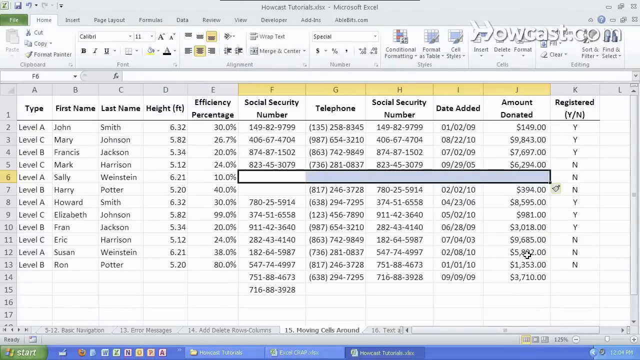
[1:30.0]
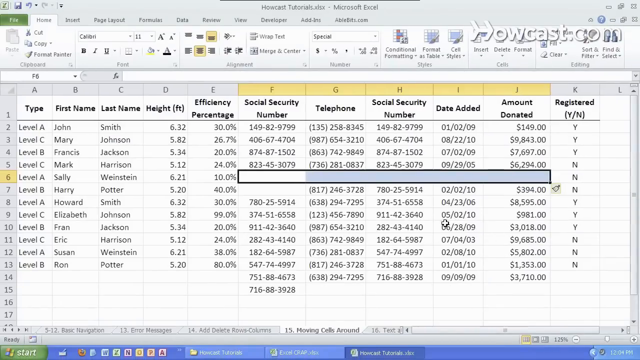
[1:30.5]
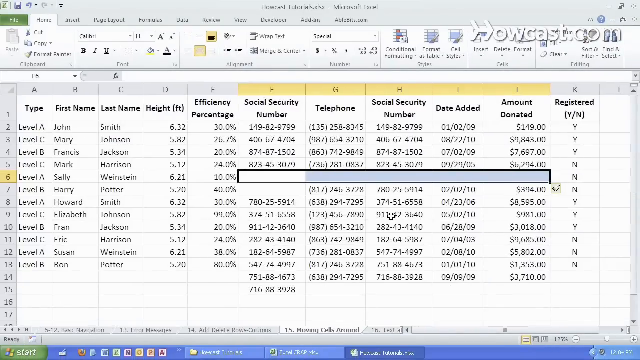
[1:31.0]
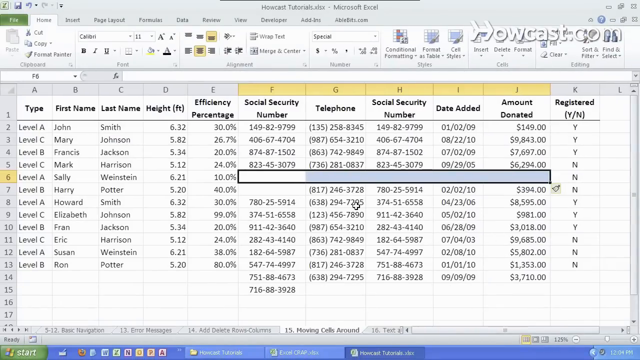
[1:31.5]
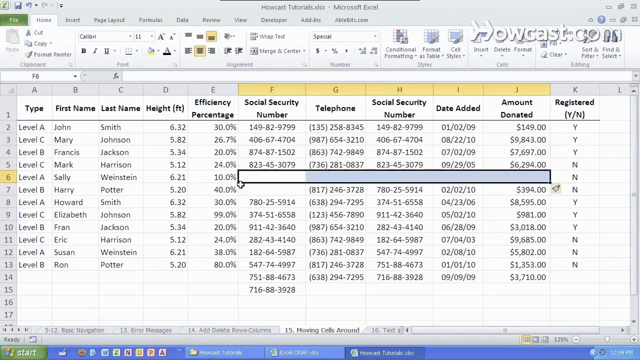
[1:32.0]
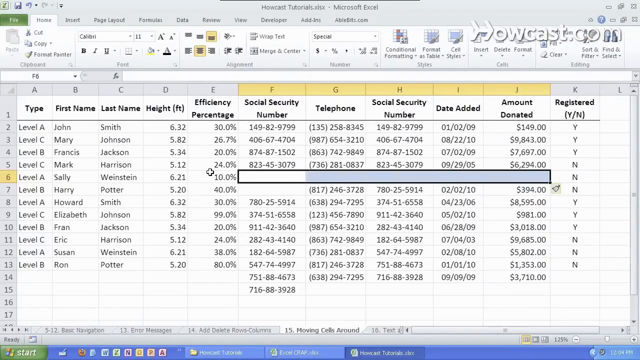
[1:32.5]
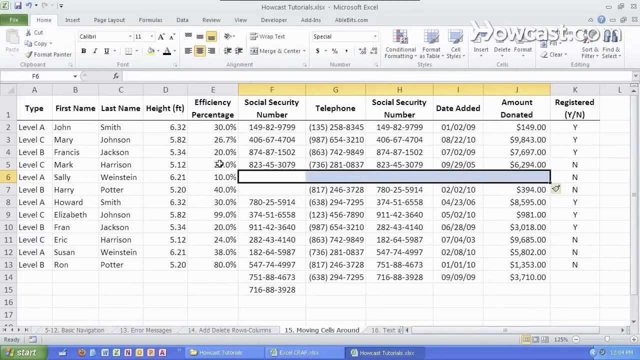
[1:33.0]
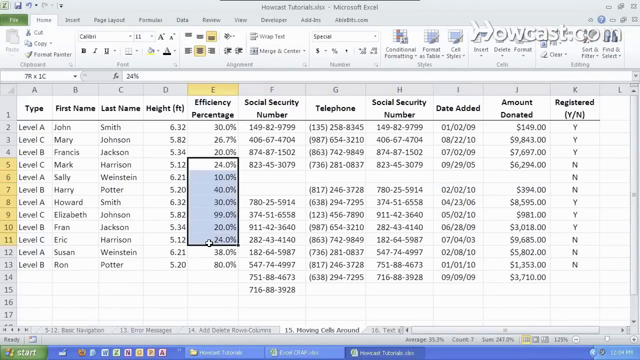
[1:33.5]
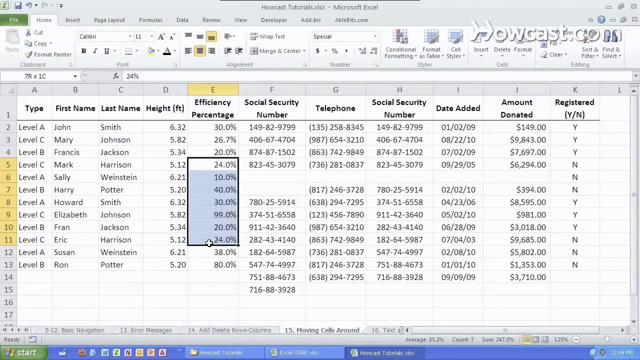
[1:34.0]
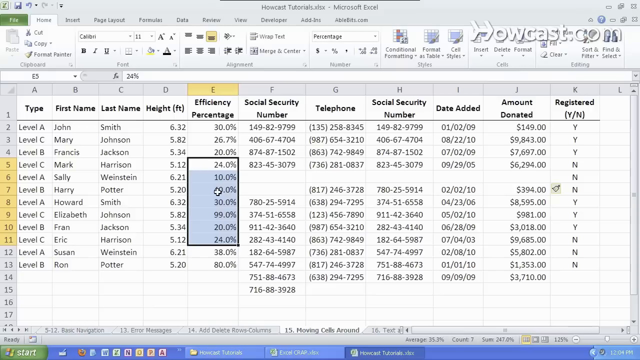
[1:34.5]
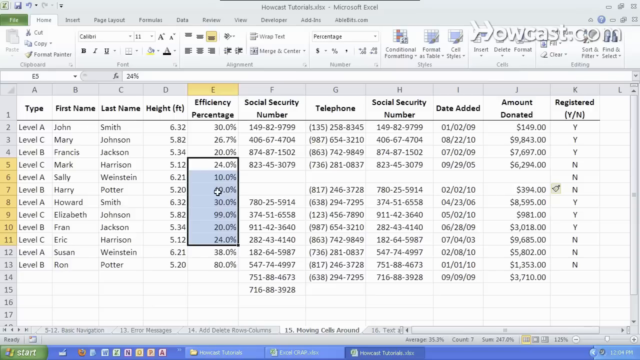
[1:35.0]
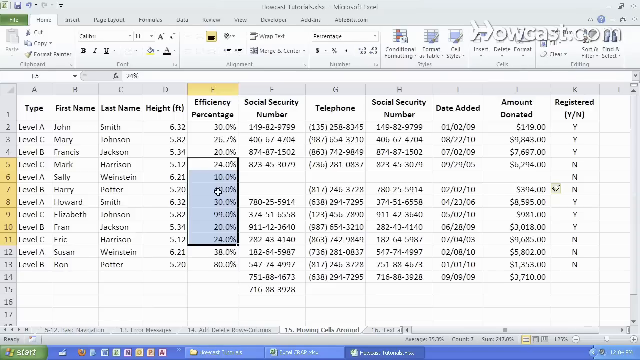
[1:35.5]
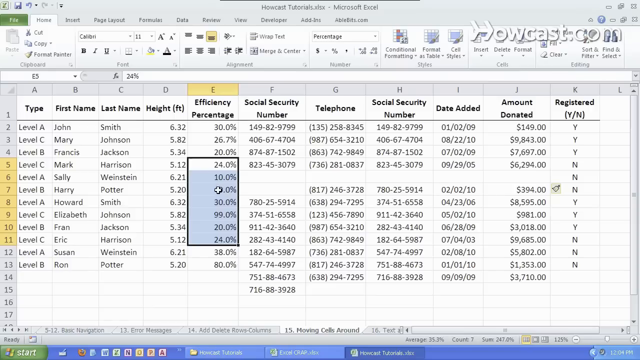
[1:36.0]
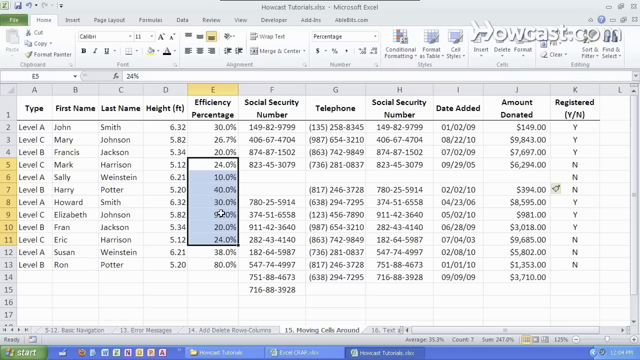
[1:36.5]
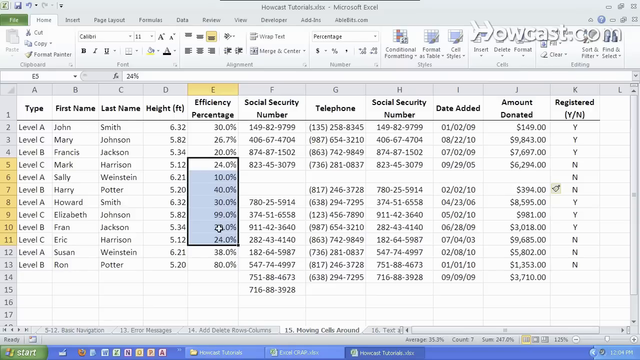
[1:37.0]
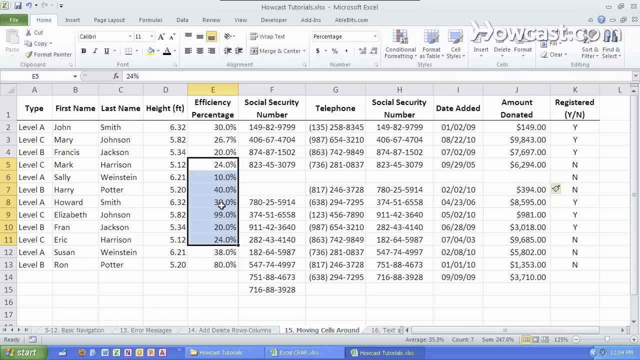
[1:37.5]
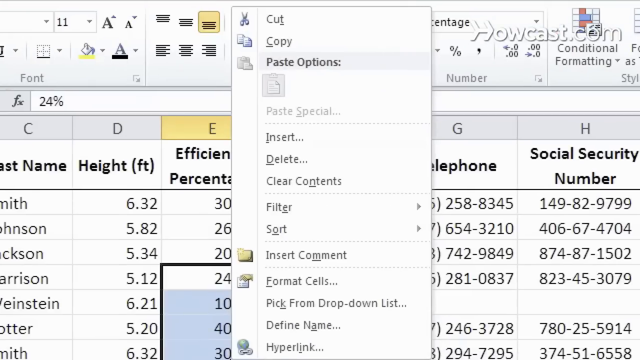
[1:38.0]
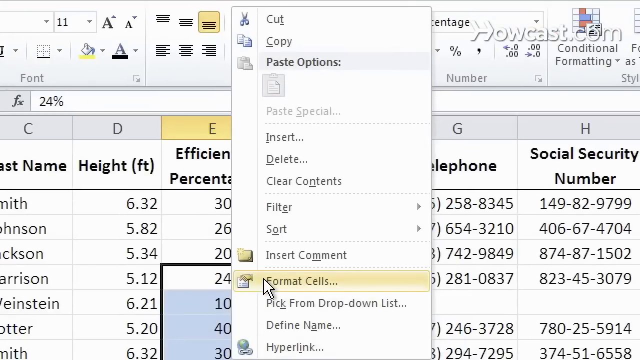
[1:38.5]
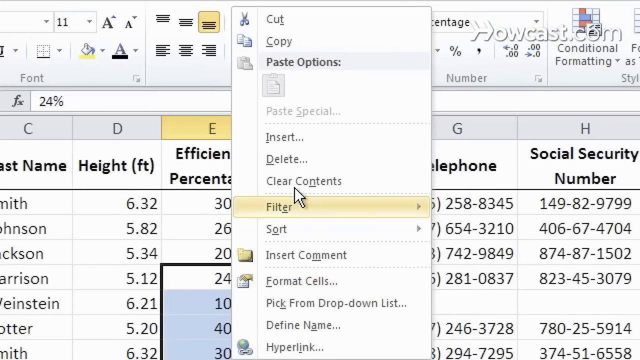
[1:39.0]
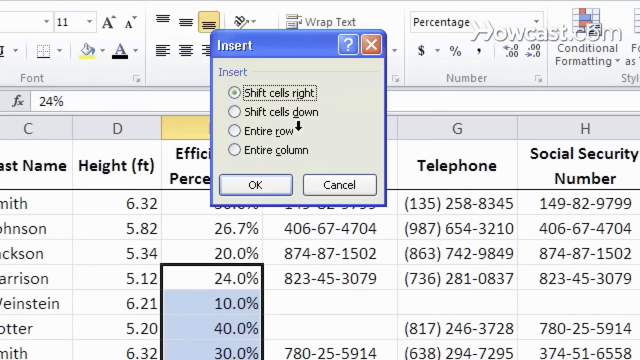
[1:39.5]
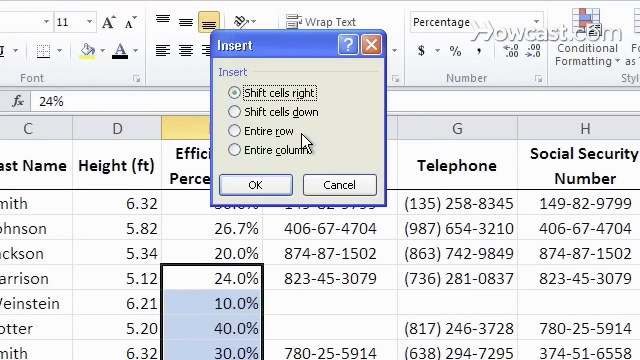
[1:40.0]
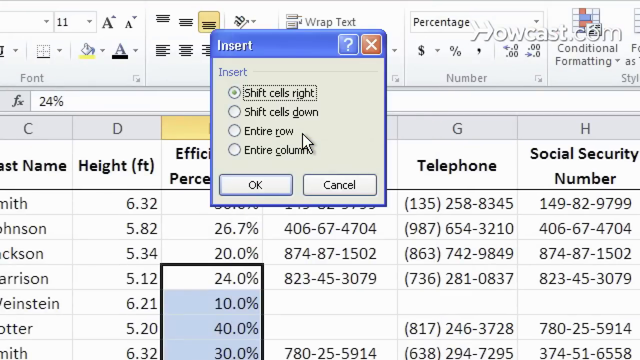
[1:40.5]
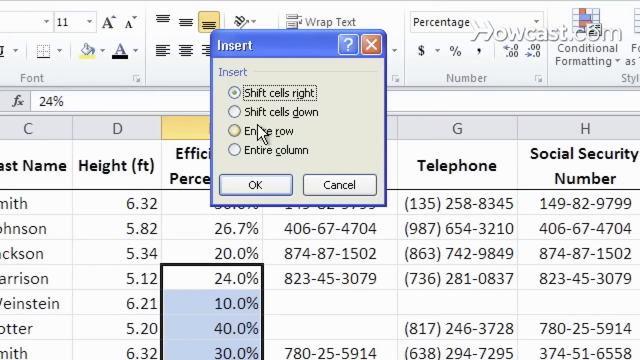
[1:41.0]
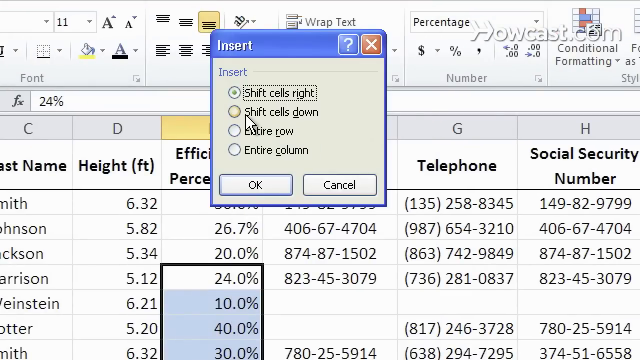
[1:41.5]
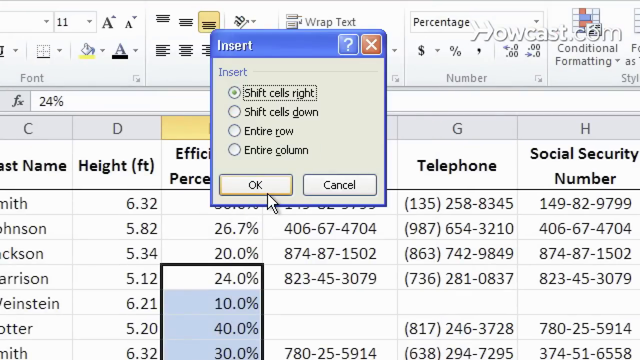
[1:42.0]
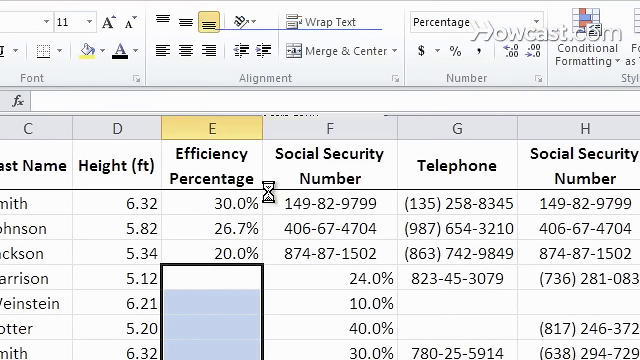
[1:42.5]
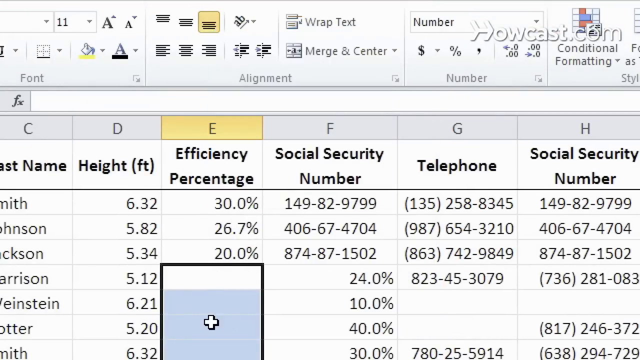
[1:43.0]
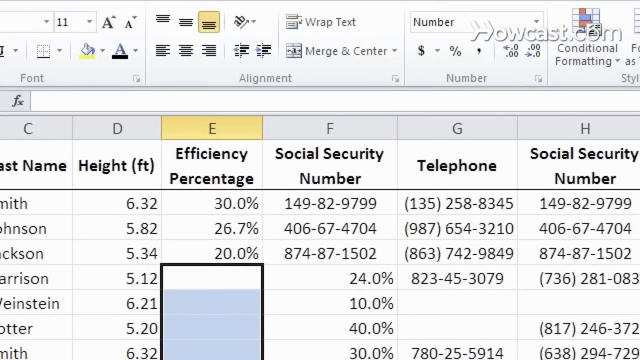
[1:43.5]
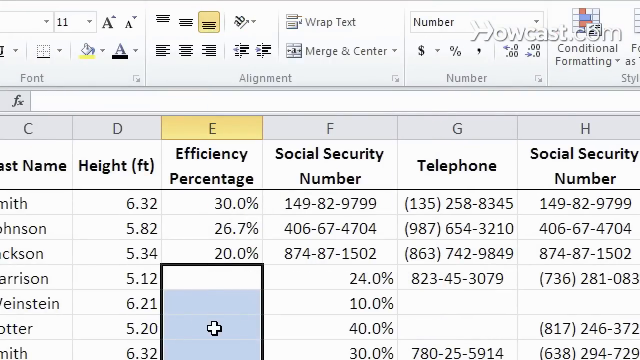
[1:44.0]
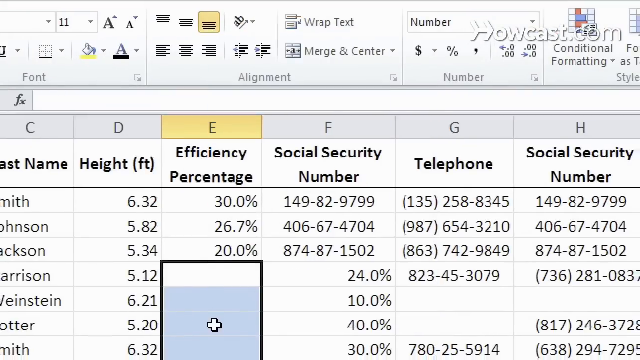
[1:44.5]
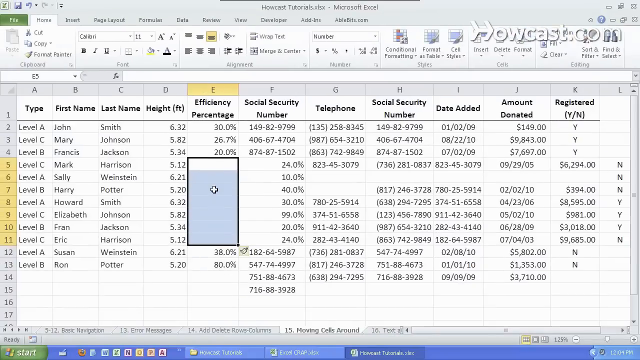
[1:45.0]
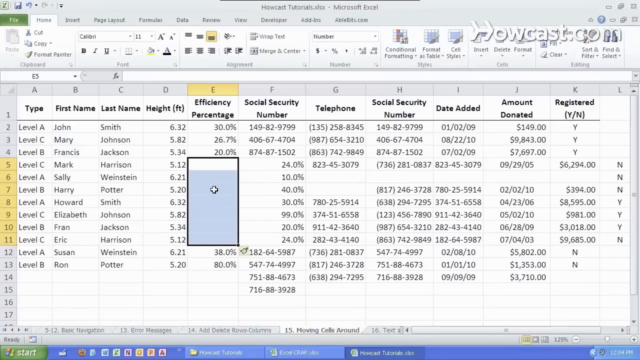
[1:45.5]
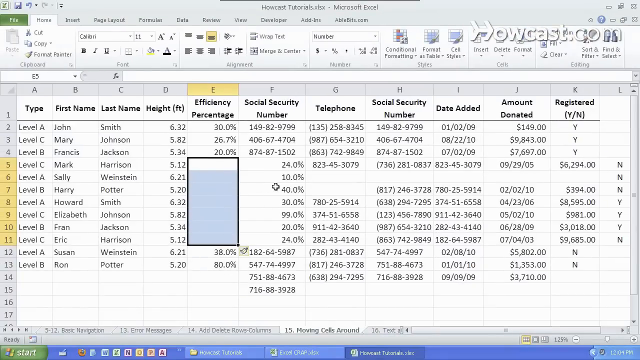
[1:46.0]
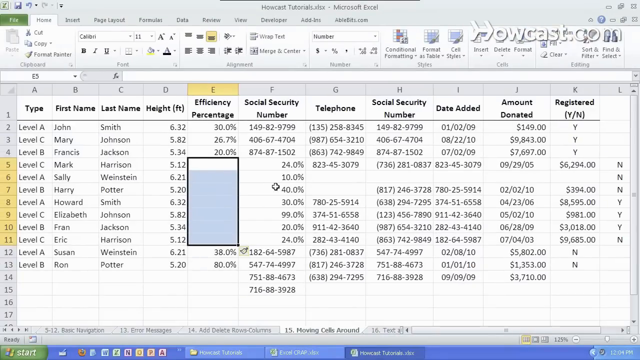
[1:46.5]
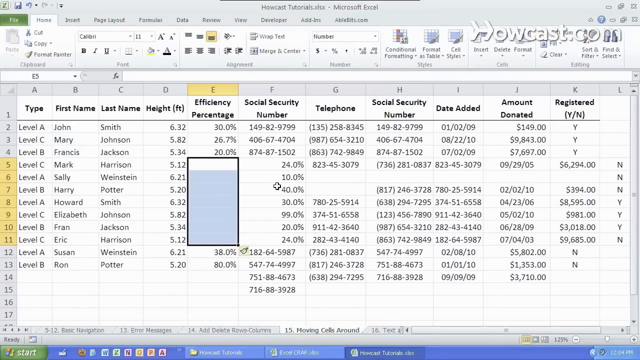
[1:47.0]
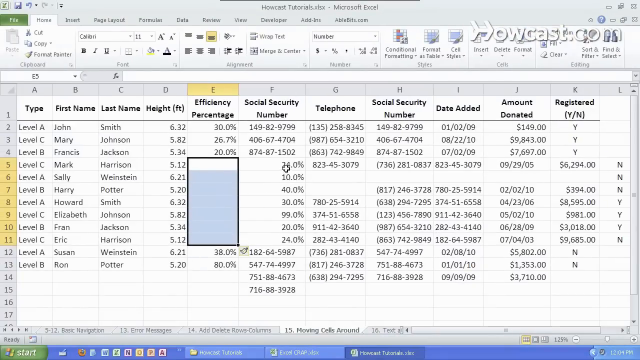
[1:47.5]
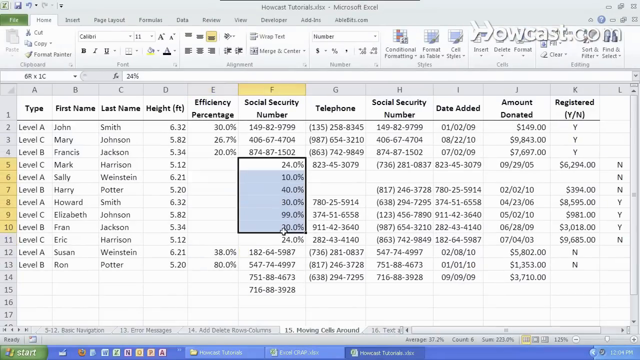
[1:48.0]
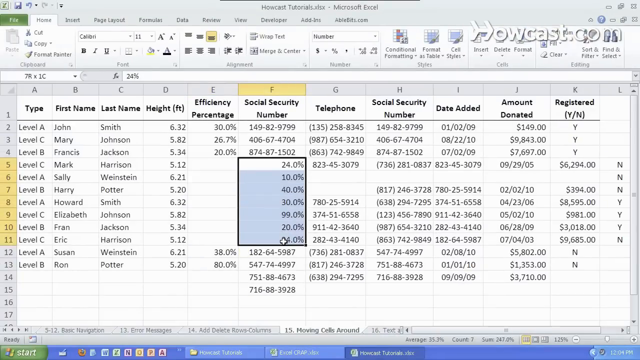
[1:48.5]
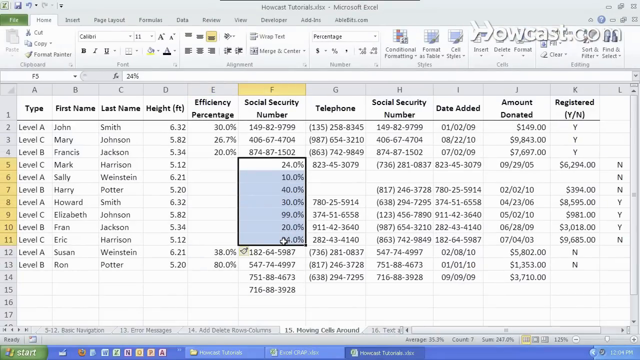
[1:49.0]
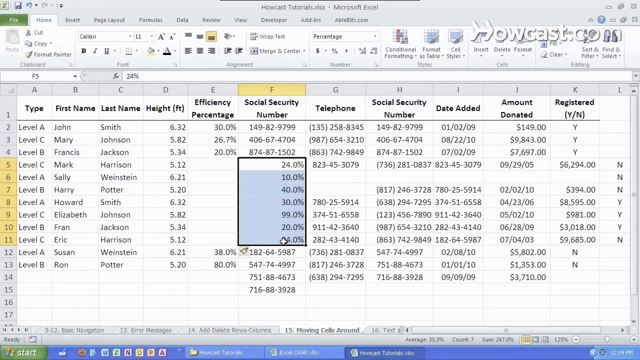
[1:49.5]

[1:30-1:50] The man seems to have shifted the social security number cell down twice, and the telephone, the other social security number and the amount donated cells down once, on the right side. He hovers over the efficiency percentage column and highlights 24%, 10%, 40%, 30%, 99%, 20% and 24%. He right-clicks, inserts, and shifts the cells to the right, so these values end up to the right of where the social security number is. Seven cells are now pushed to the right once, making the sheet messy.